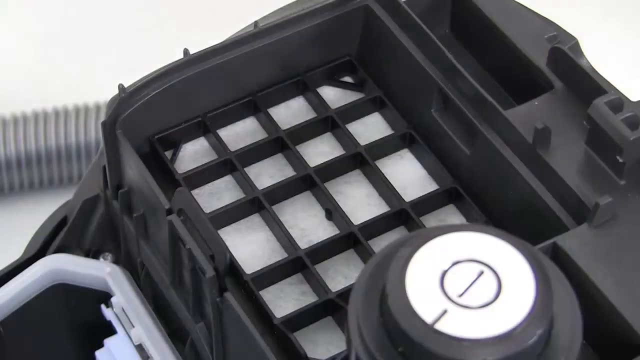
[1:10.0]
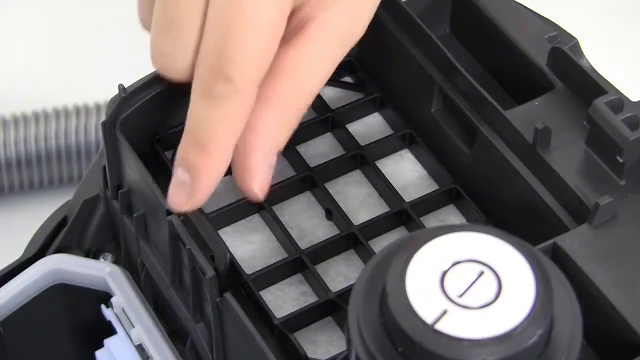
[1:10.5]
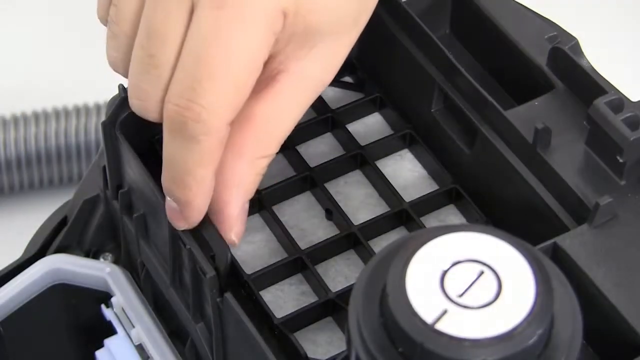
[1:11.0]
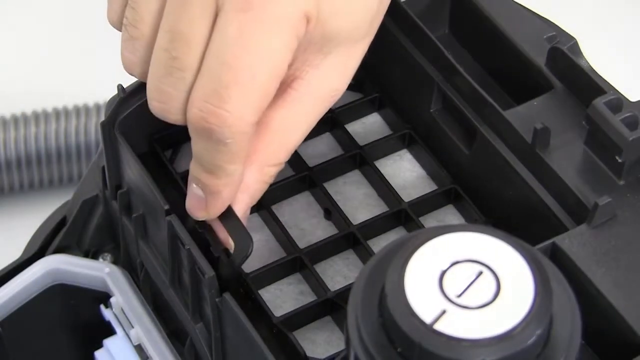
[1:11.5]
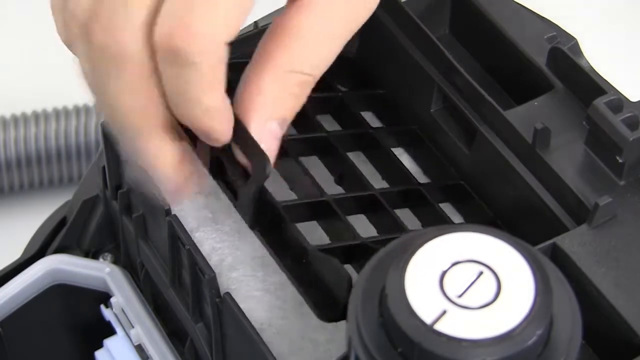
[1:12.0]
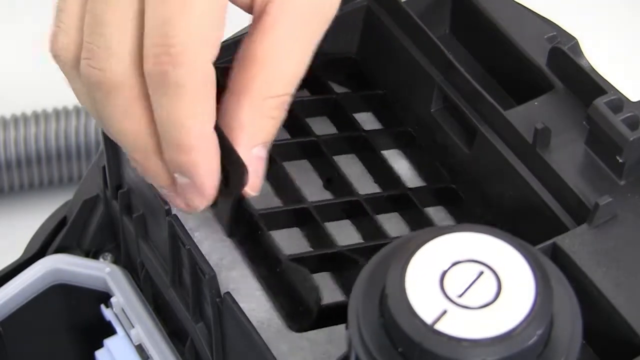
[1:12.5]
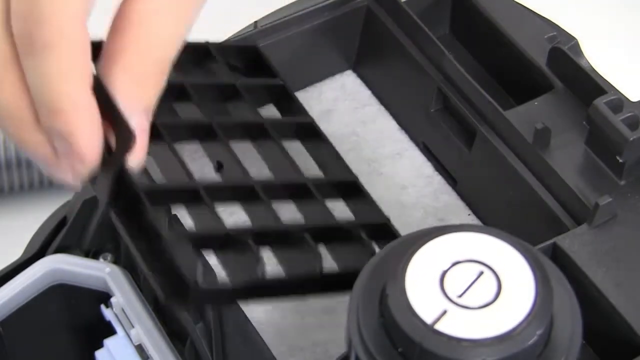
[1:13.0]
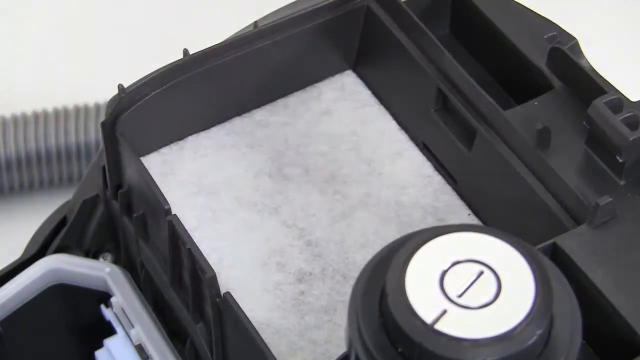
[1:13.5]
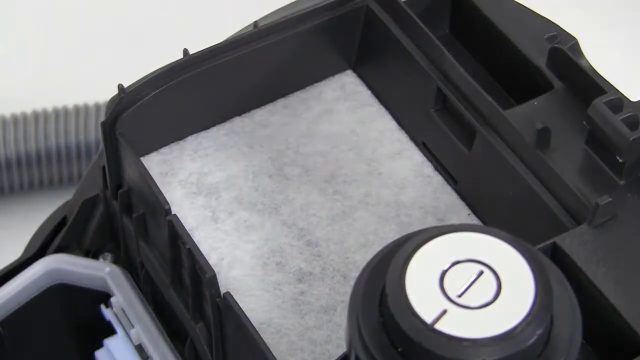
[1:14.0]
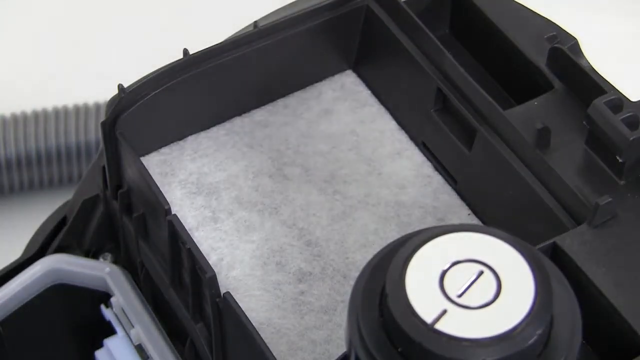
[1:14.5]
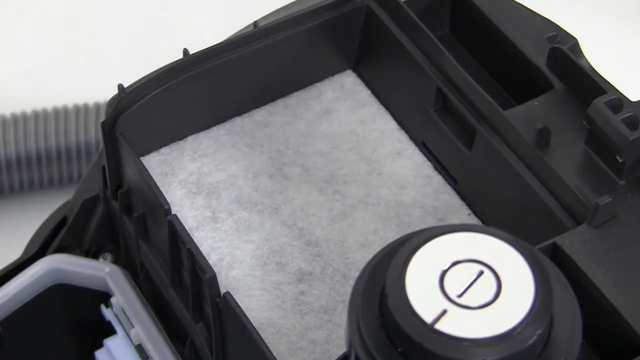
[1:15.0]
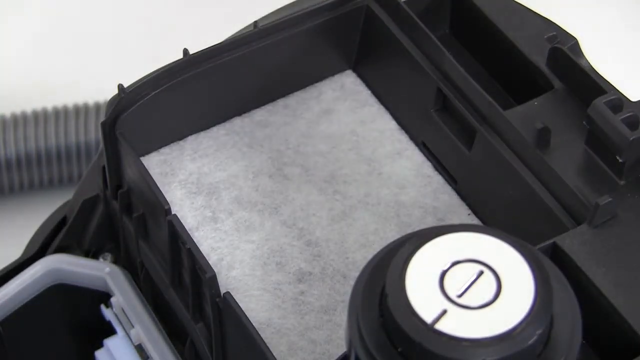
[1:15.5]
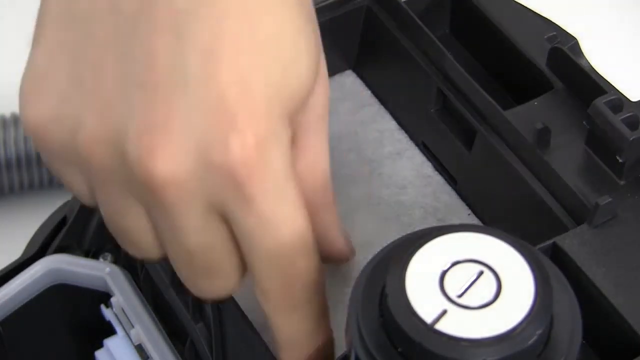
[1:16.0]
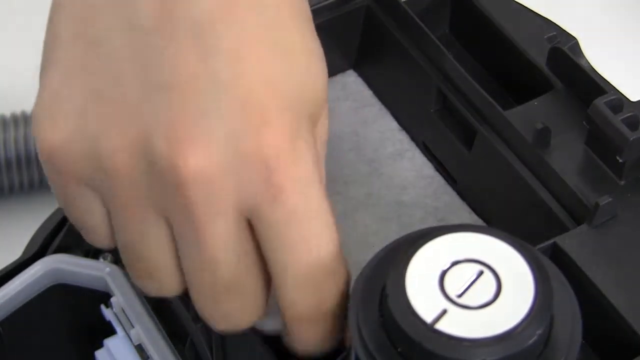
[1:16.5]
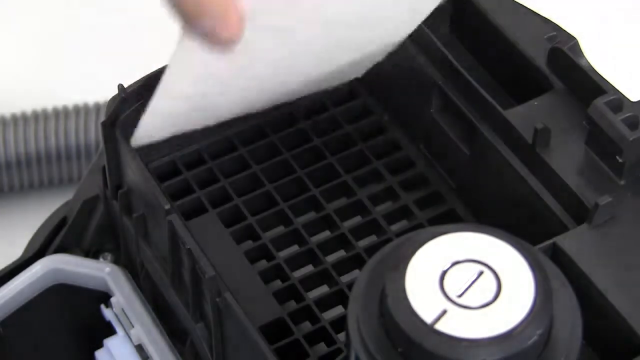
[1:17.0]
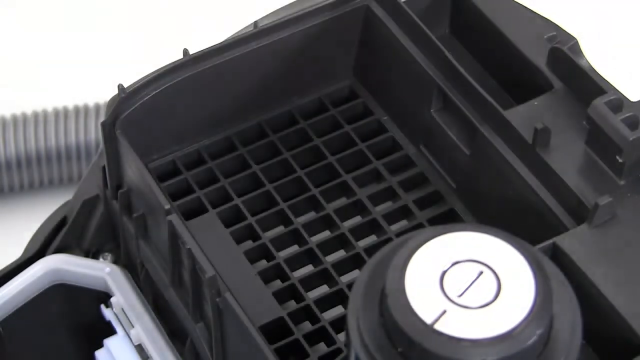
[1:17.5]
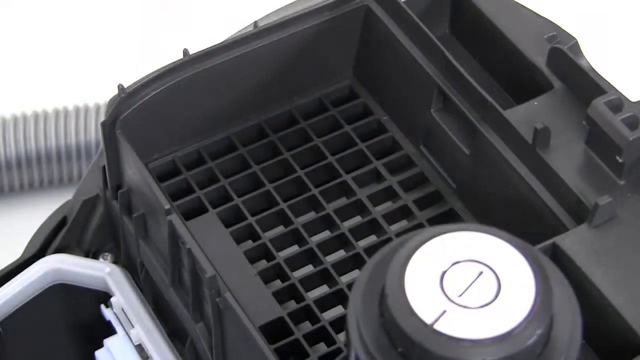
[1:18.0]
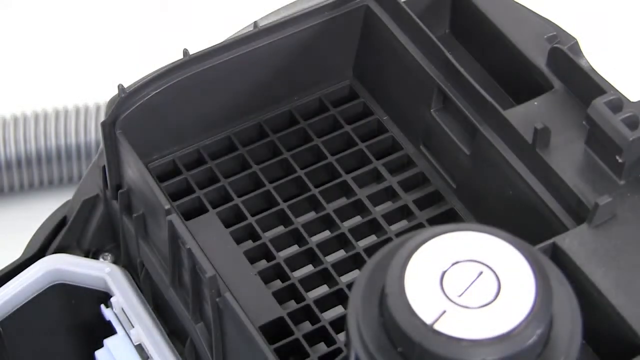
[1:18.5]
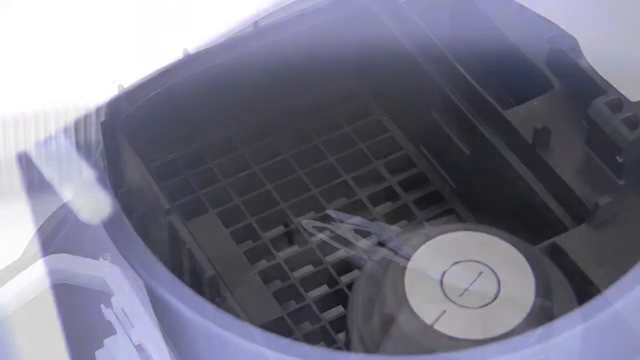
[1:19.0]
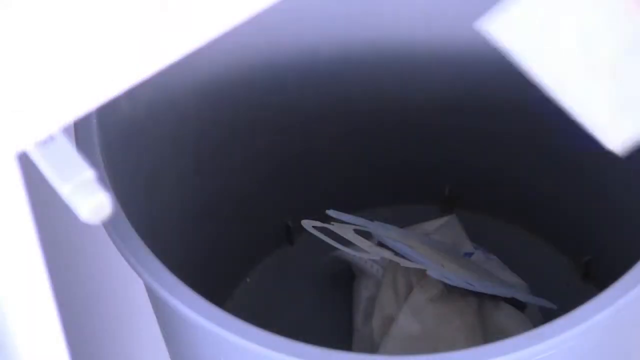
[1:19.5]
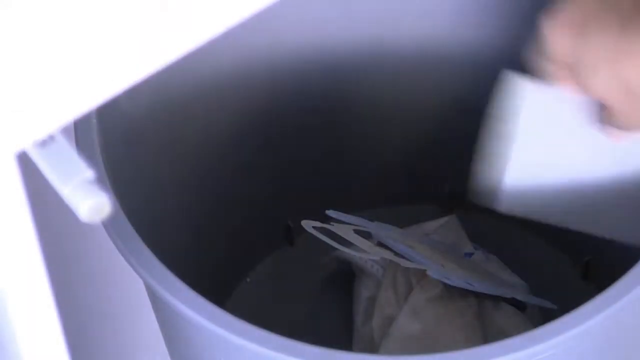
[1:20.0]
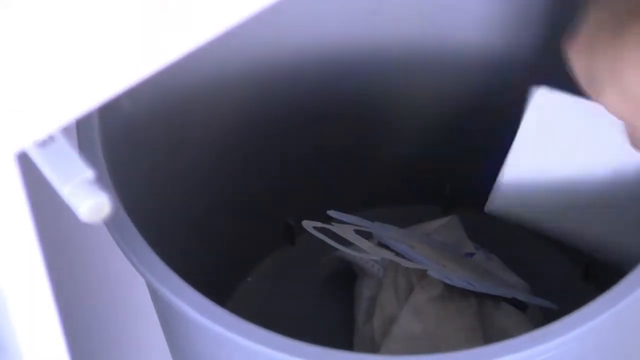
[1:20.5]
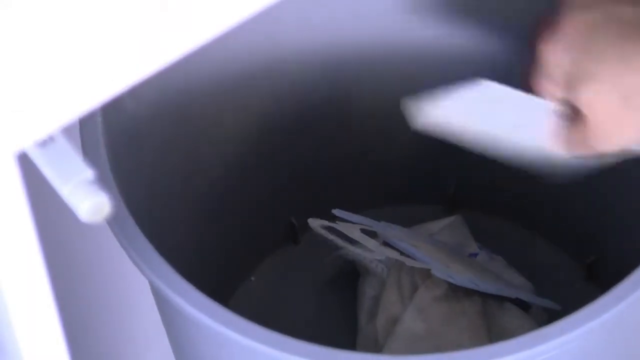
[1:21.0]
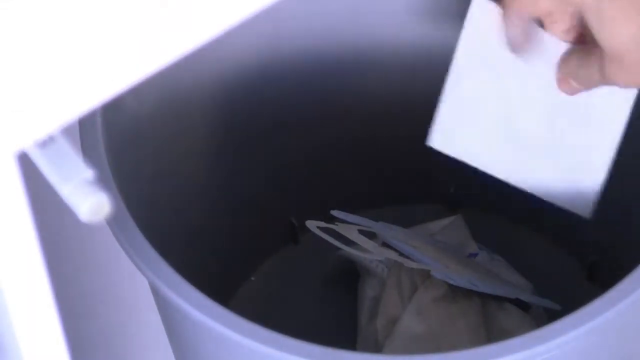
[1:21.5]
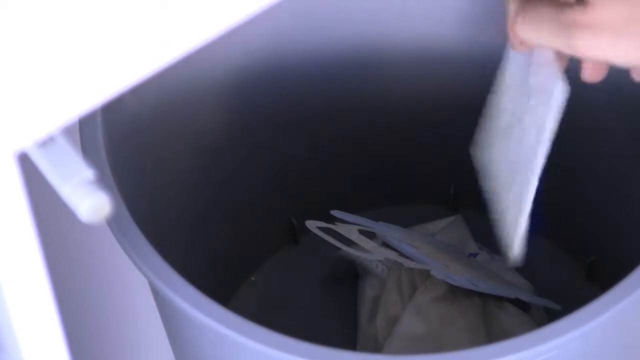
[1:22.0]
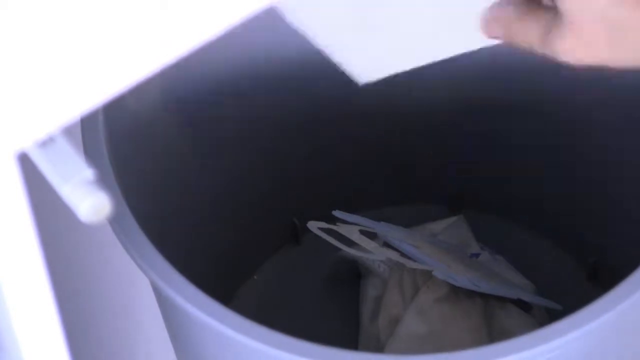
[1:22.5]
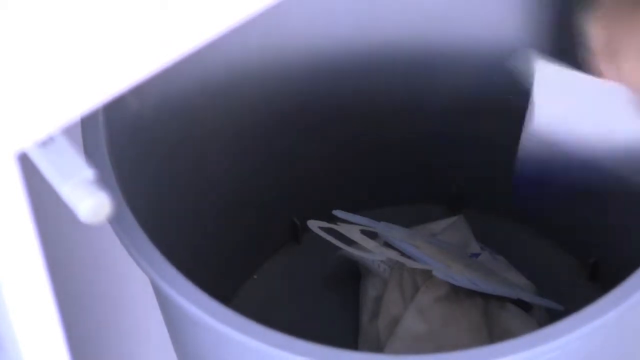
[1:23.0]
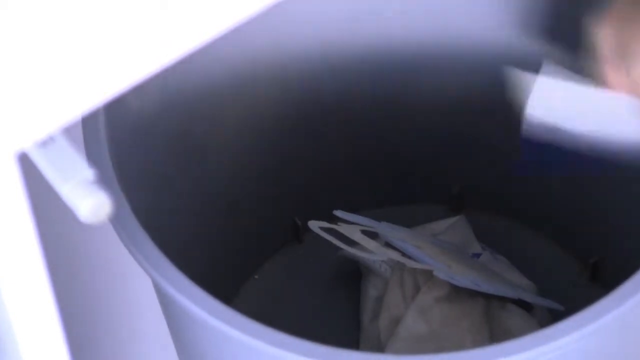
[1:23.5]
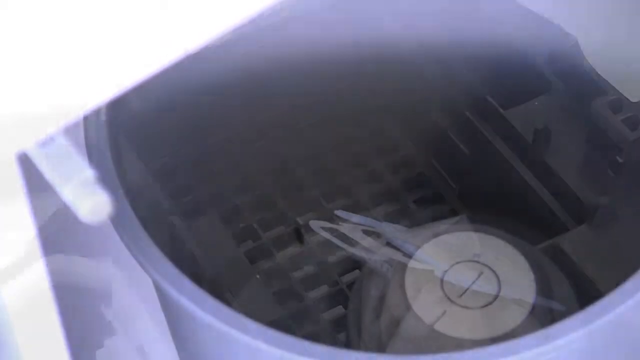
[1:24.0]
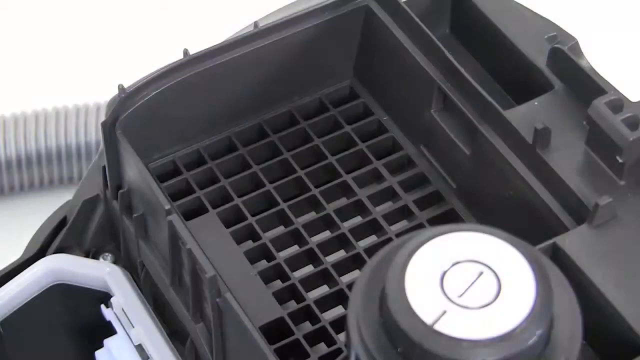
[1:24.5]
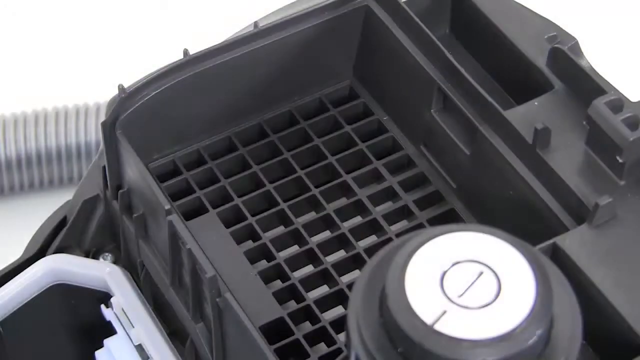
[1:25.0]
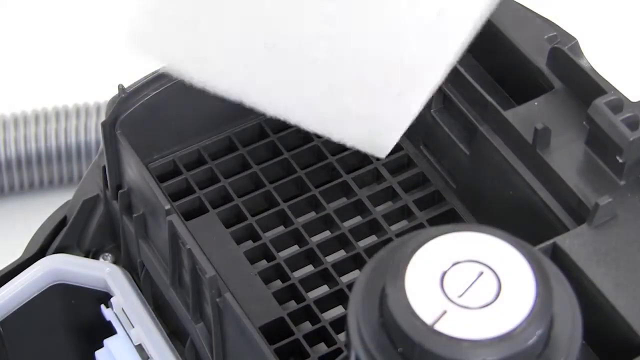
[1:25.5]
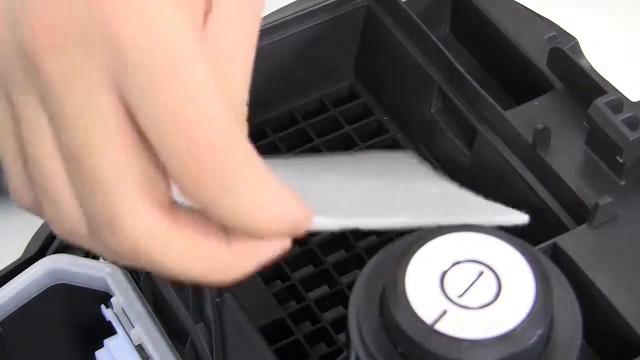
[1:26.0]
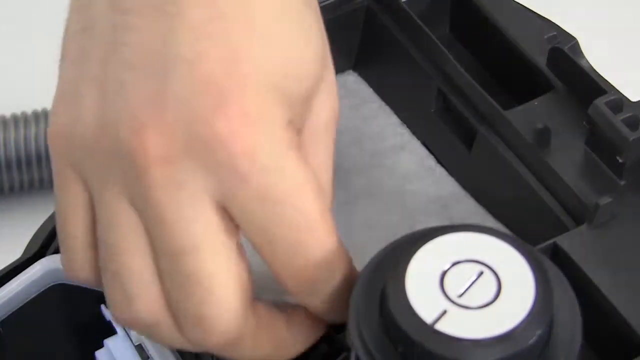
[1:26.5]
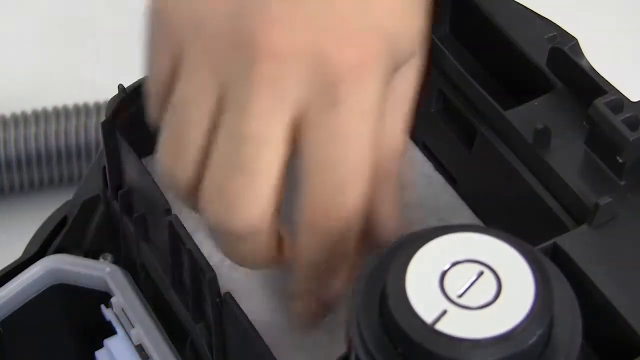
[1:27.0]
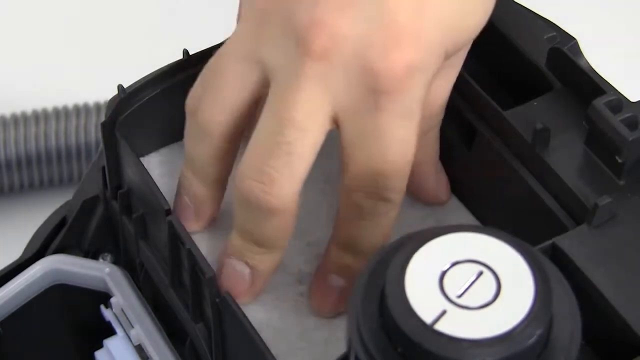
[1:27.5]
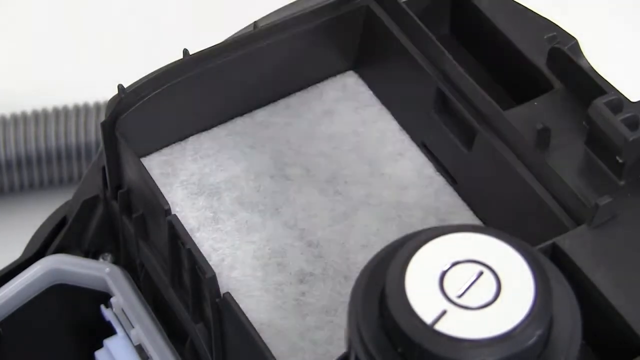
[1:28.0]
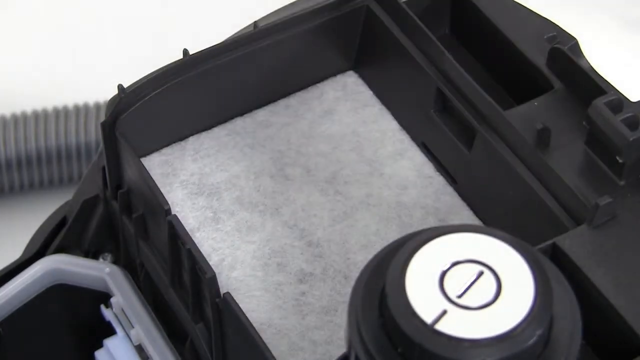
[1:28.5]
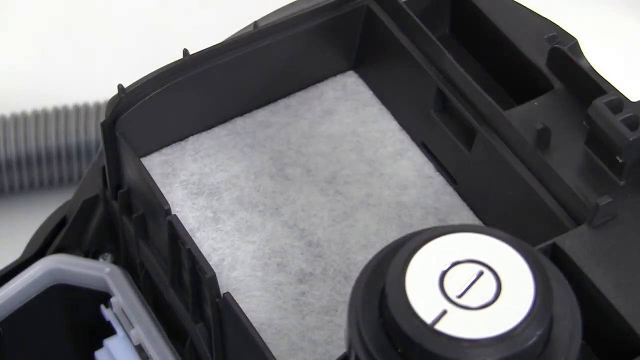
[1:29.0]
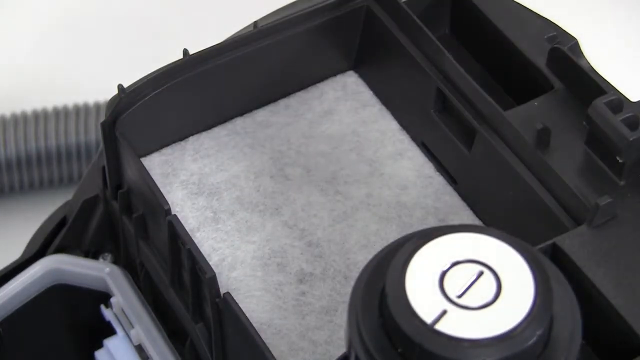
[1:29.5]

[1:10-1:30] The vacuum is open, with some of its parts visible. In the bottom right is the power button, a straight line with a circle surrounding it, in white, while the knob is black. To the left of that is a black grid-like plate with four by four squares, and below that is a white filtration sheet. A hand removes the grid-like plate by pulling a tiny black tab and lifting it up and away from the vacuum, exposing the filter sheet. The hand then returns and removes the filter sheet, exposing another grid-like object at the very bottom of the vacuum. The scene transitions to the hand carrying the filter sheet and tapping it aggressively against a curved object, which could be a dustbin or some other object for holding residues, to remove whatever was on the filter paper. The scene then transitions to the vacuum again, with the hand placing the filter sheet back into the spot it was removed from. The 4x4 grid plate is then placed back and snapped back in.